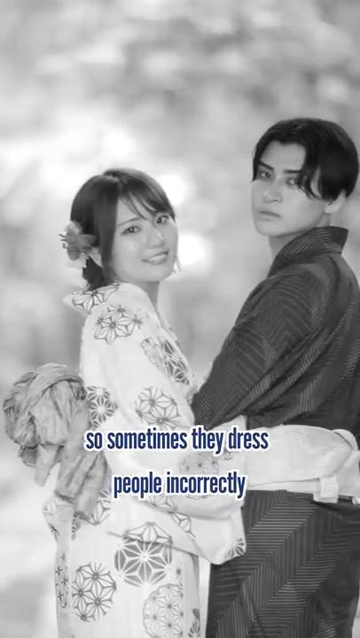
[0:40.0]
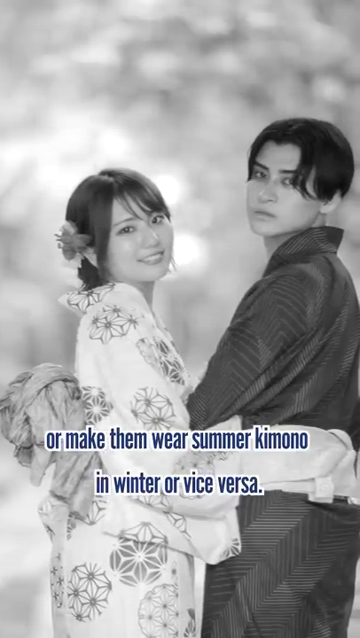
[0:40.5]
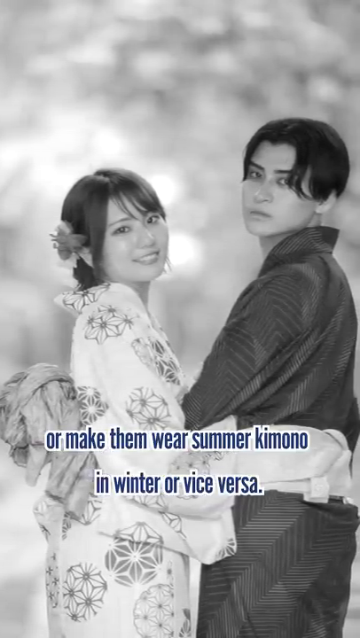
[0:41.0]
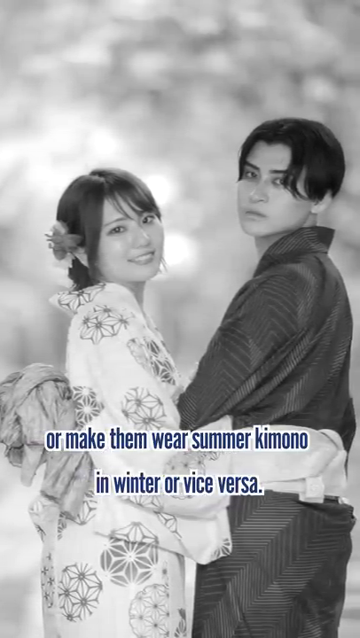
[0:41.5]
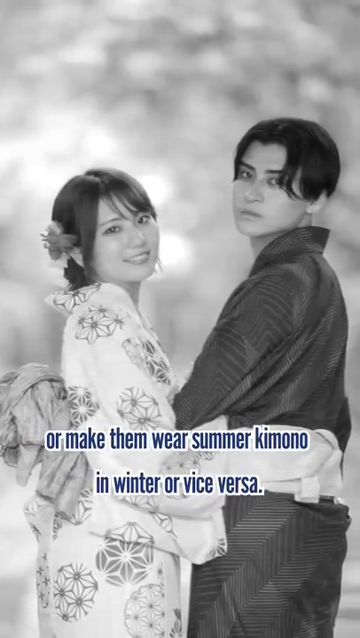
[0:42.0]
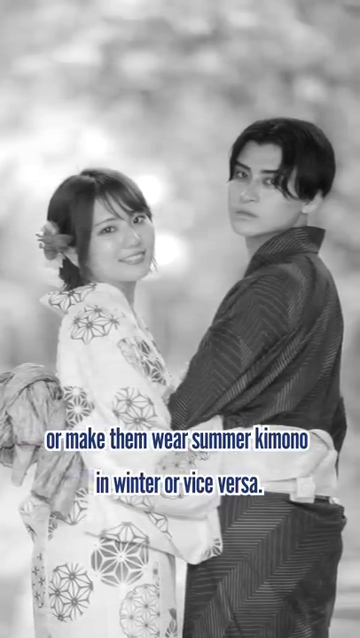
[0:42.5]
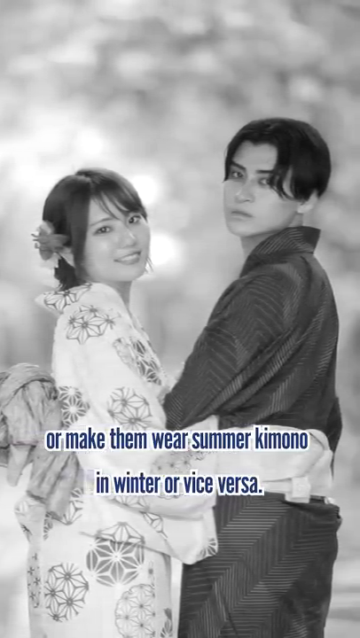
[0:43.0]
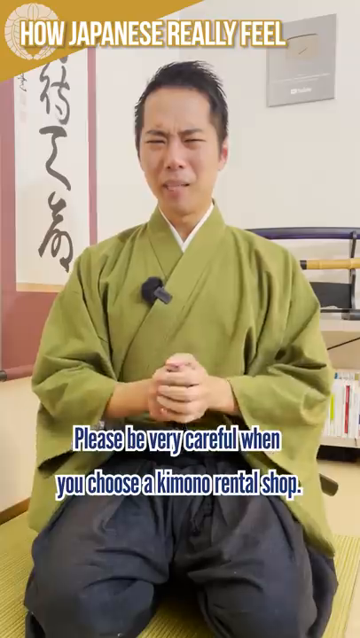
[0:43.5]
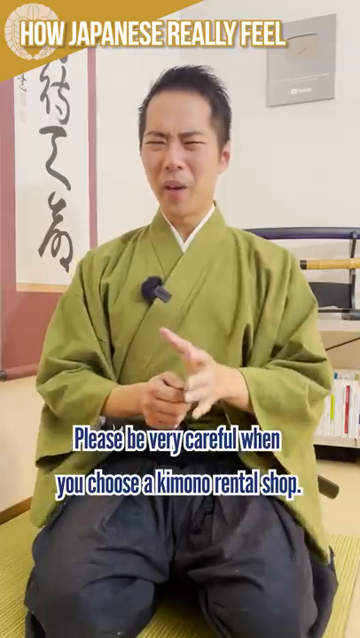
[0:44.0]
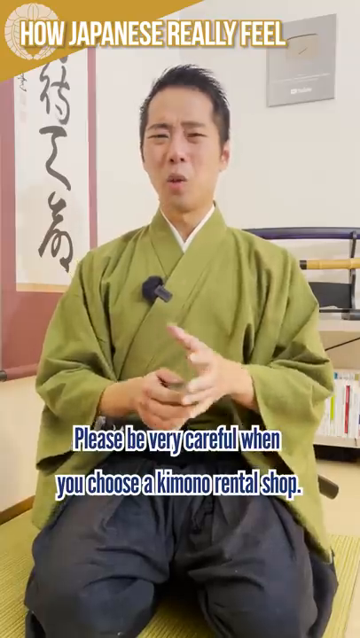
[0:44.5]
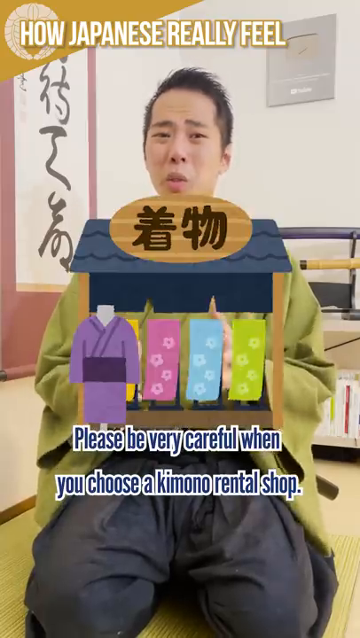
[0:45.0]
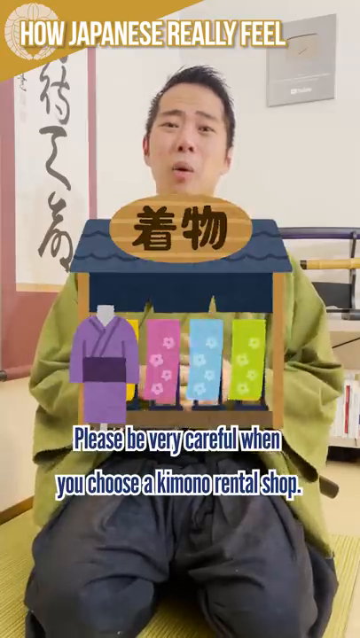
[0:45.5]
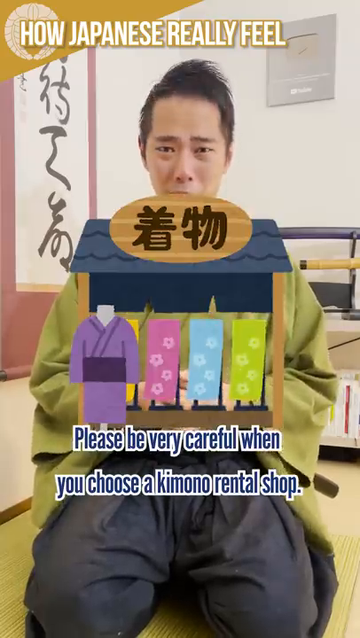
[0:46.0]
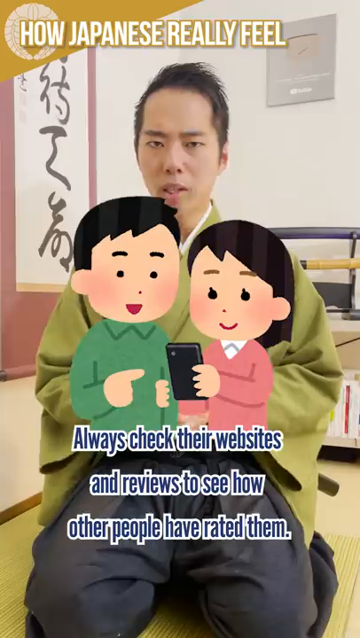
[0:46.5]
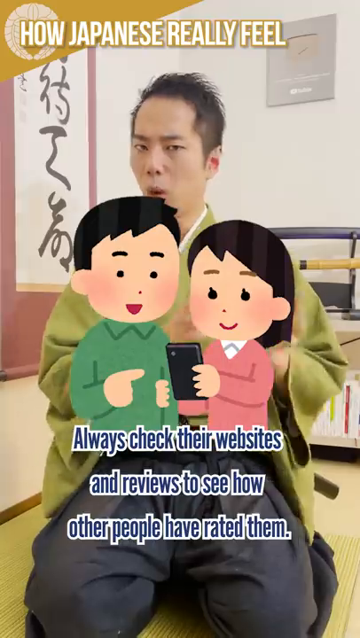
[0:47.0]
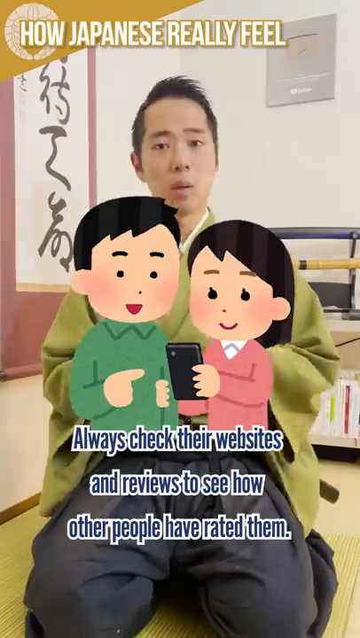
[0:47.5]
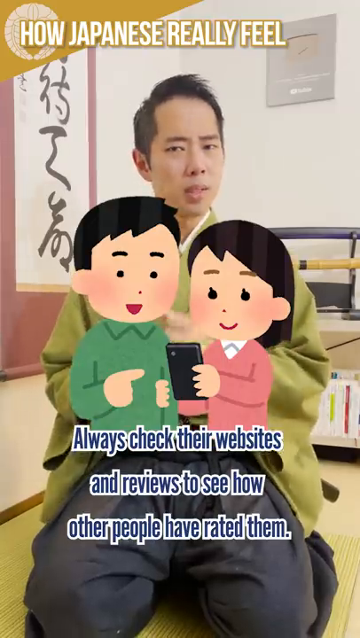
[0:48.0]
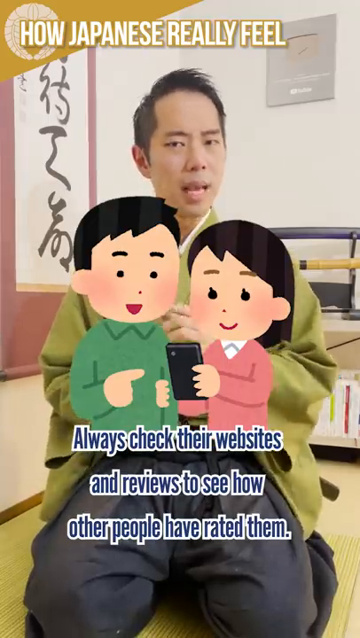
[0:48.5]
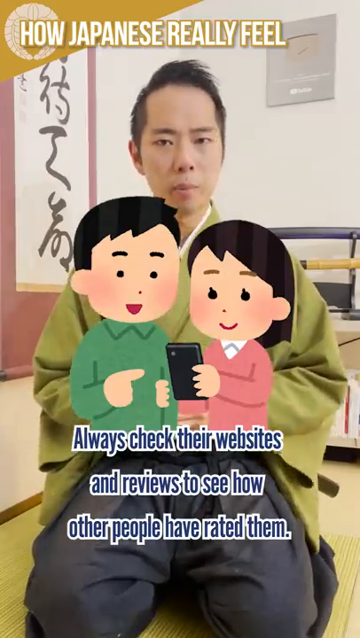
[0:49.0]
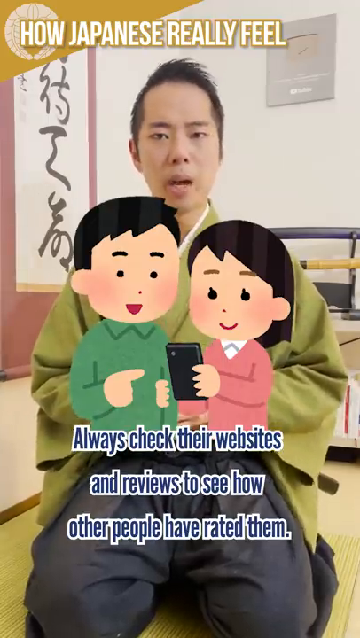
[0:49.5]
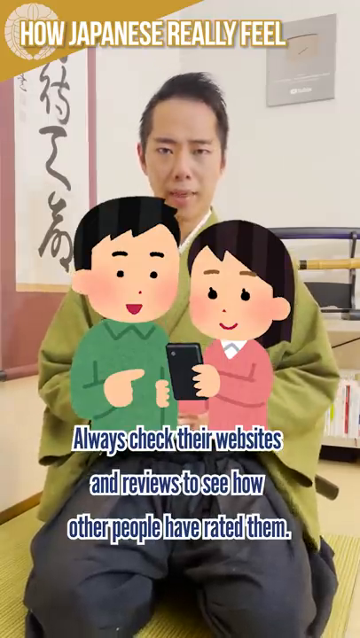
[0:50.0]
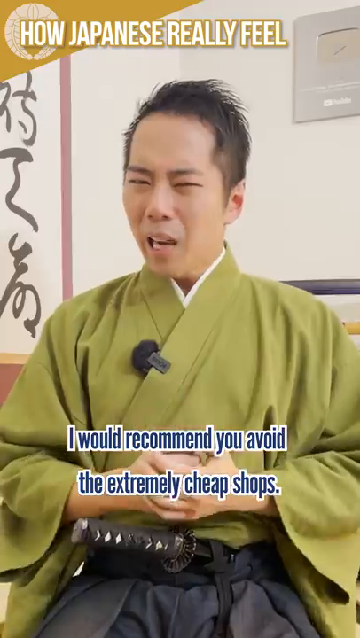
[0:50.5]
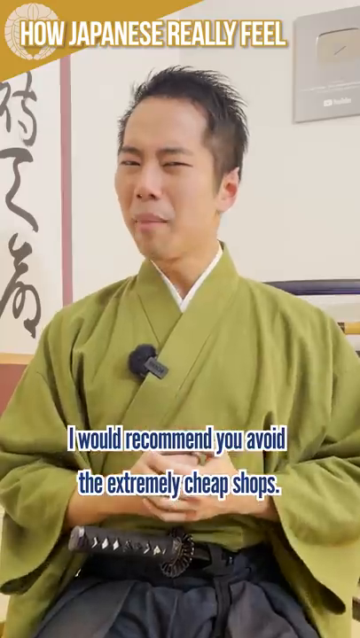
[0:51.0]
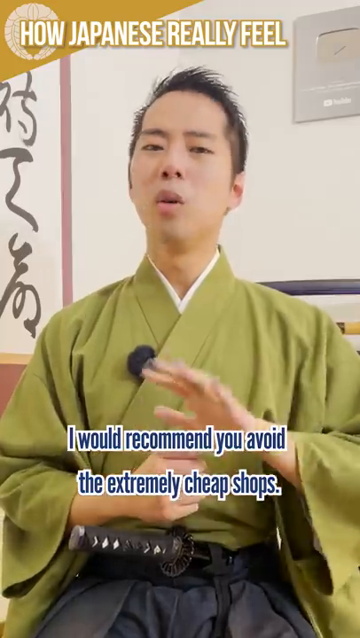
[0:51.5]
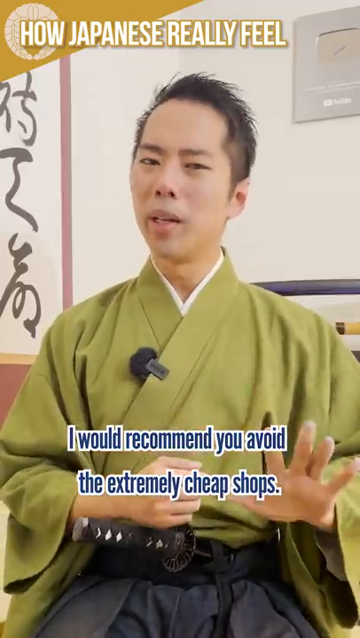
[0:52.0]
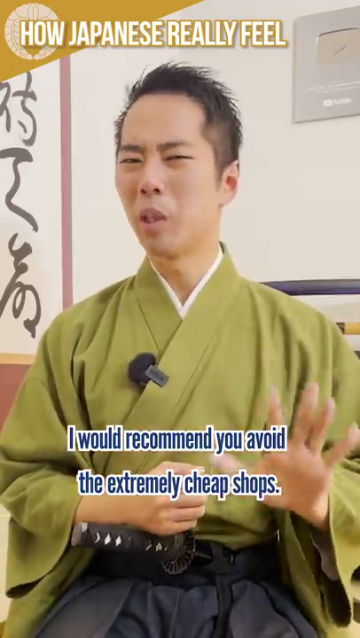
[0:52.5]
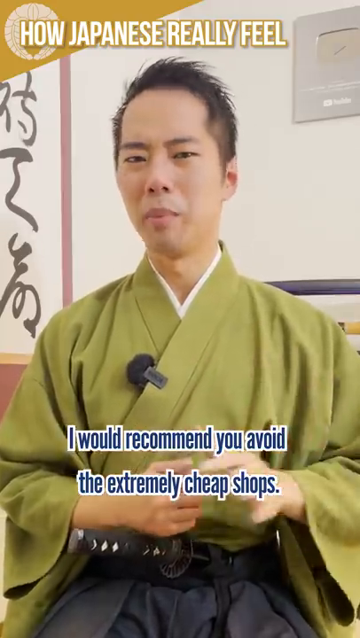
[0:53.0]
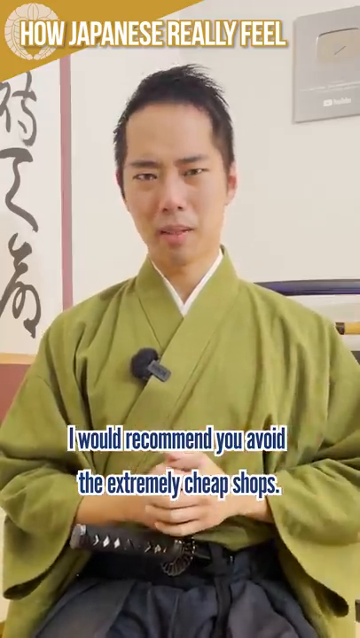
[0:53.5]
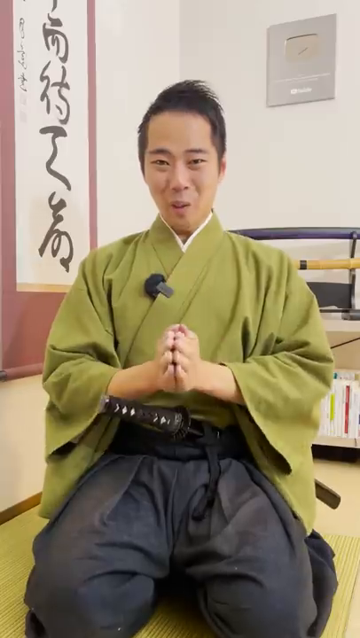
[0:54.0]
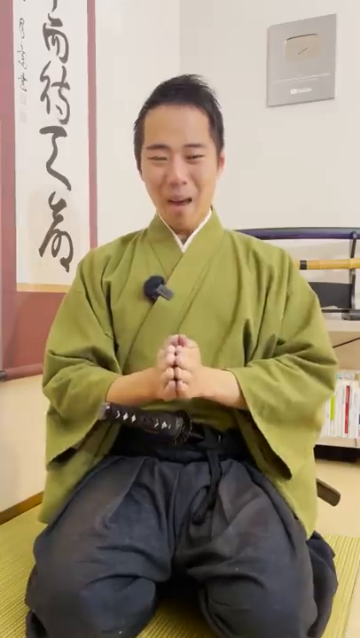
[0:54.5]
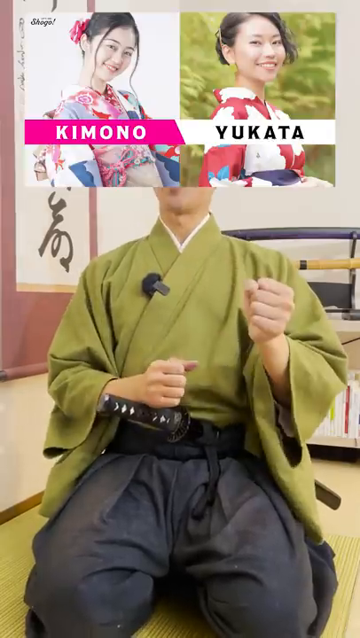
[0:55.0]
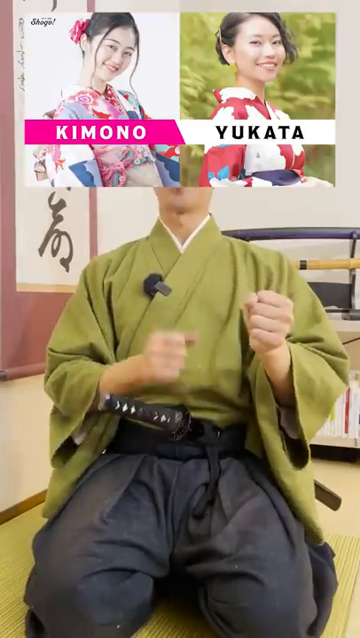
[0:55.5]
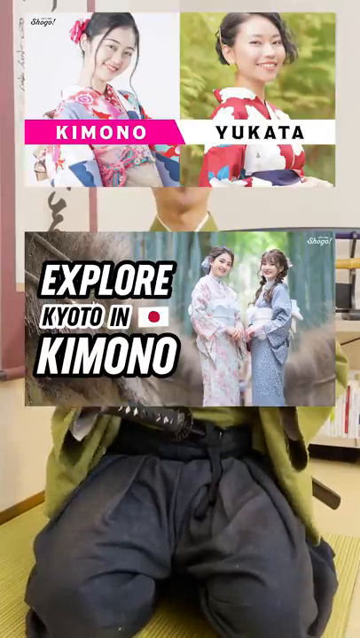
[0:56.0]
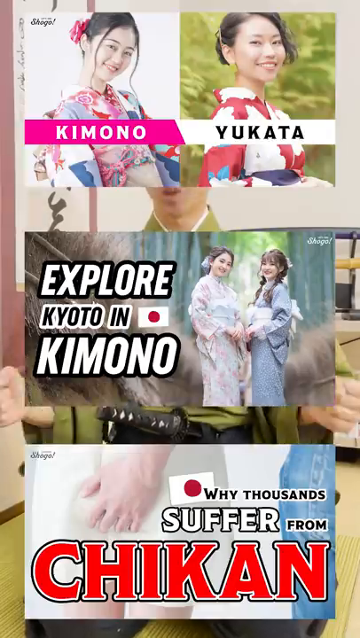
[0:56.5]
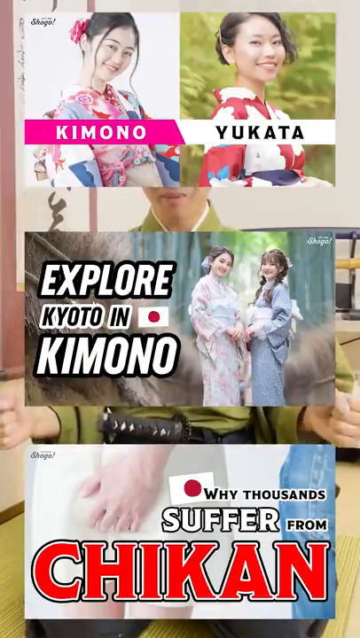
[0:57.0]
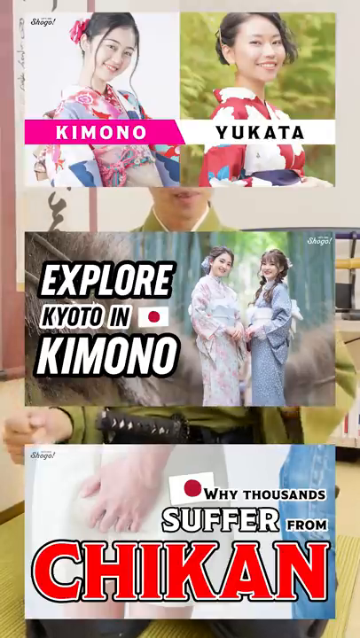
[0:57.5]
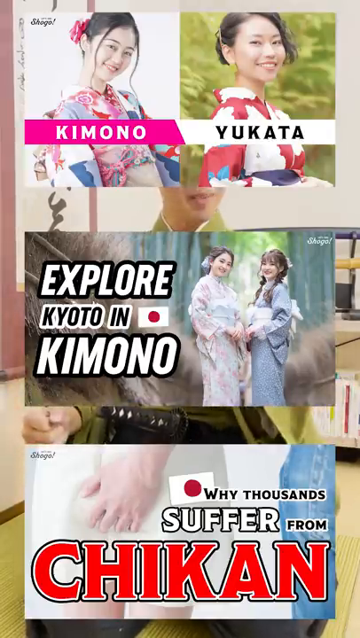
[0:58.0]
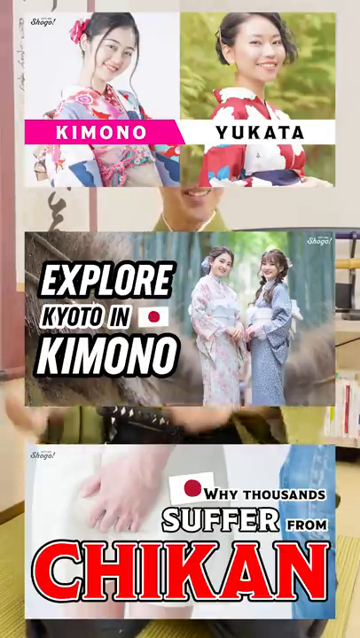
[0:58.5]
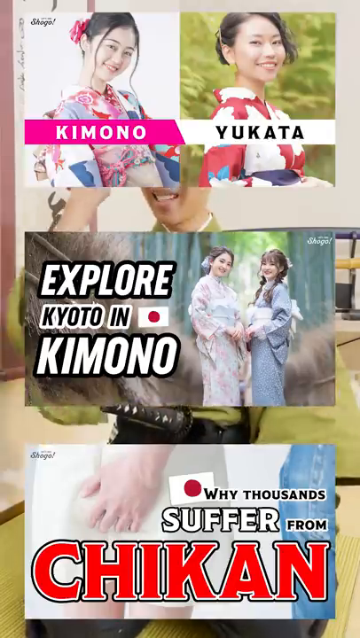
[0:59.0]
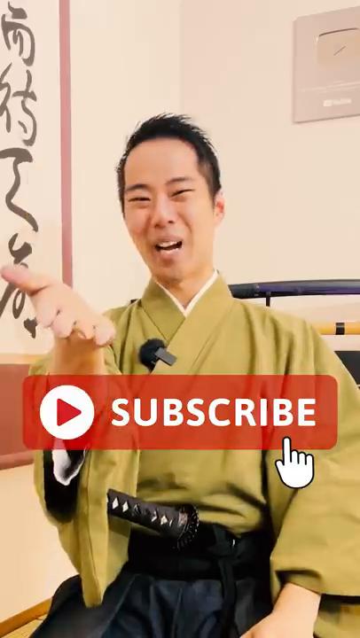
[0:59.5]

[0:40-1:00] Text on the screen says that sometimes some shops make foreigners wear summer kimono in winter or vice versa, while a picture shows two people kind of looking back. An image of the man follows, and he says, "please be very careful when you choose a kimono to rent to the shop." An image of what looks like a kimono stand appears with the text "always check their websites and reviews to see how other people have rated them." A small cartoon image of a man and a woman, kind of looking at a phone, is shown with the text "I would recommend you avoid the extremely cheap shops." Finally, the man appears with what seem to be title cards of other videos over the screen.